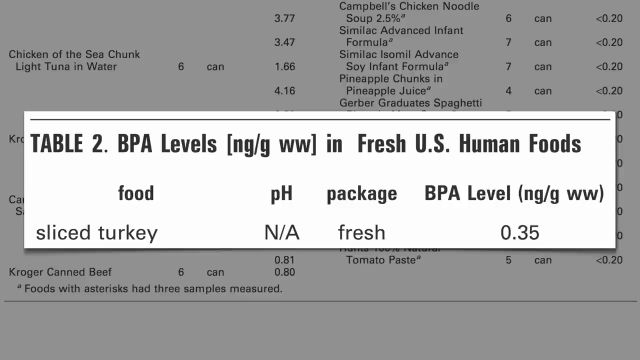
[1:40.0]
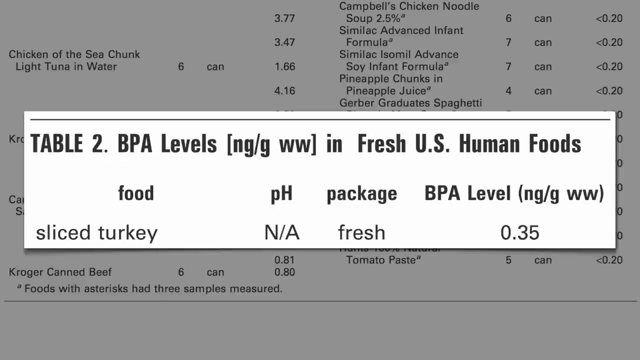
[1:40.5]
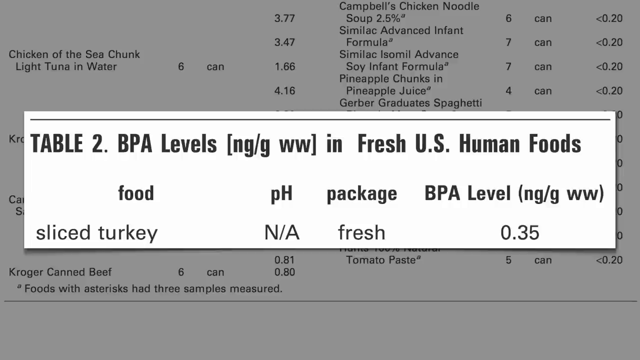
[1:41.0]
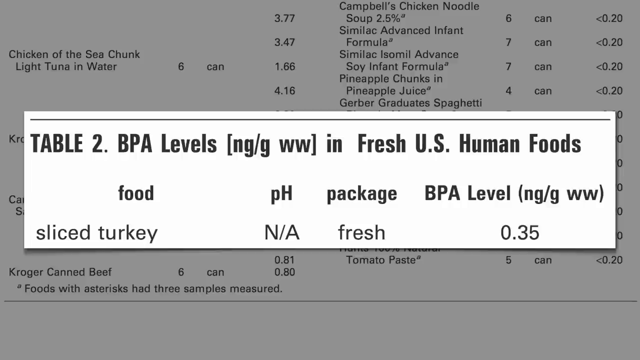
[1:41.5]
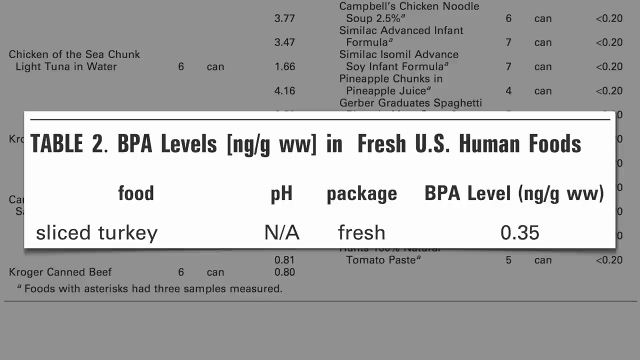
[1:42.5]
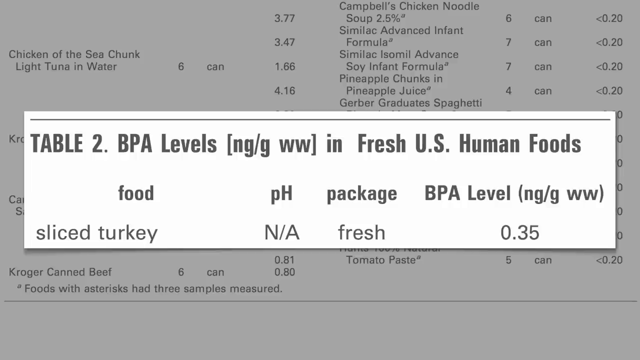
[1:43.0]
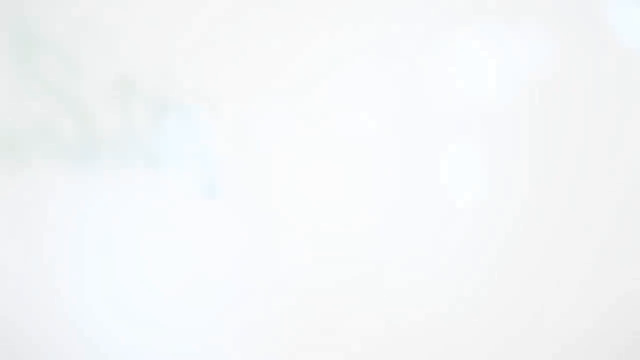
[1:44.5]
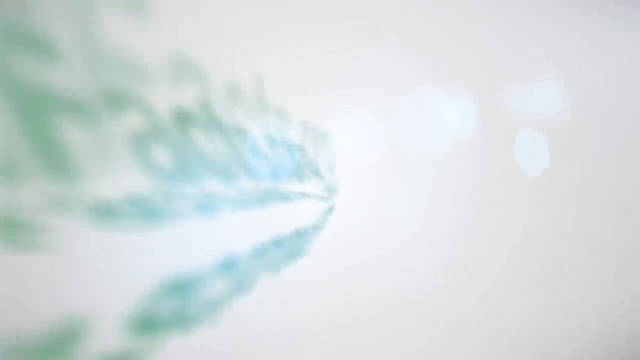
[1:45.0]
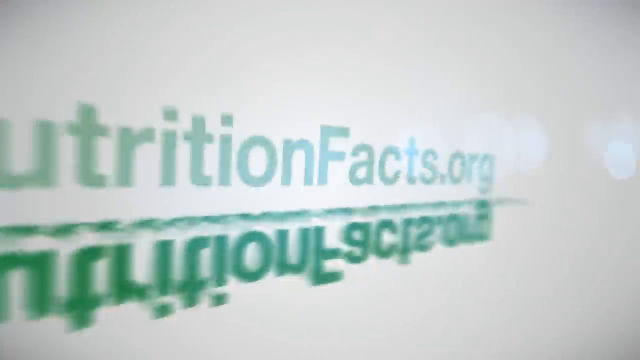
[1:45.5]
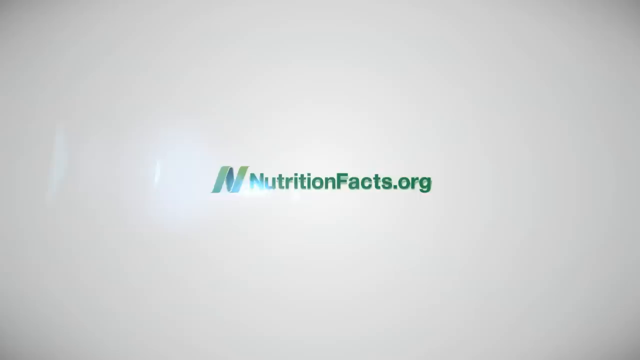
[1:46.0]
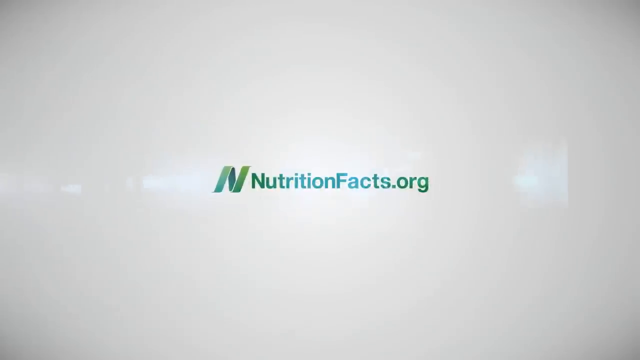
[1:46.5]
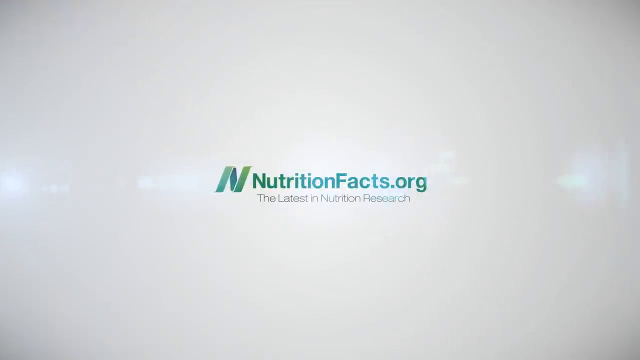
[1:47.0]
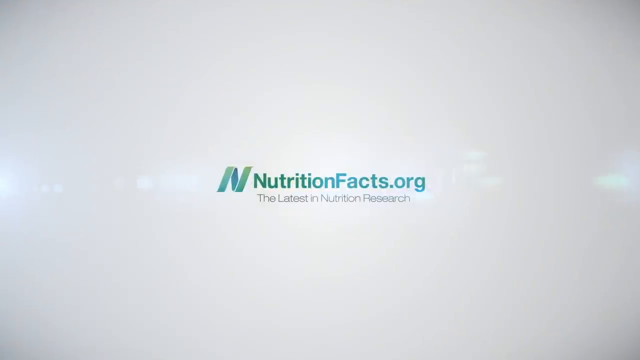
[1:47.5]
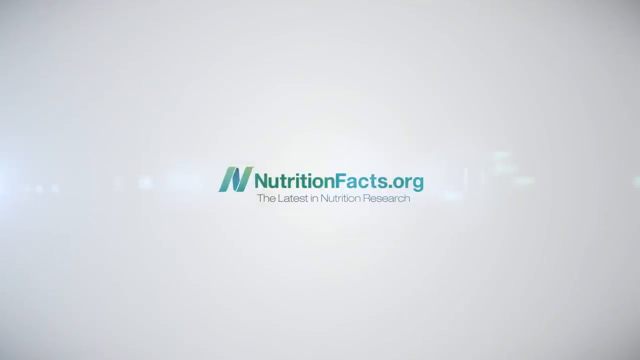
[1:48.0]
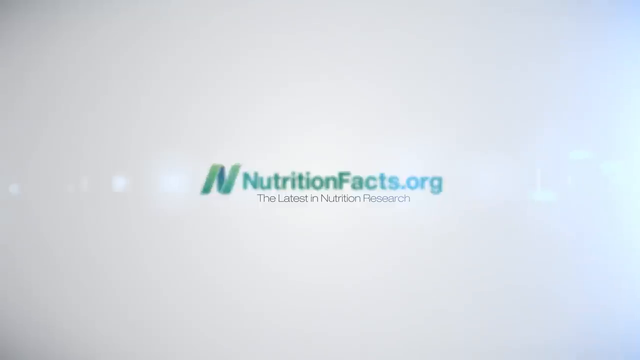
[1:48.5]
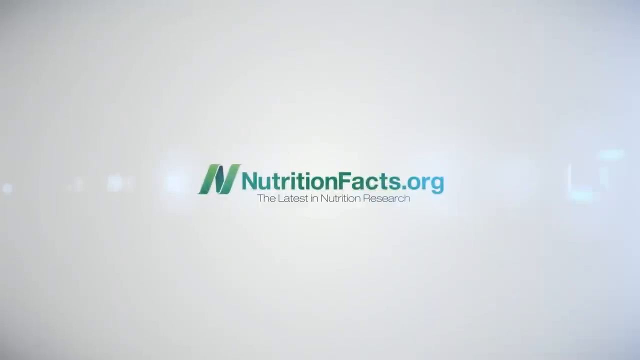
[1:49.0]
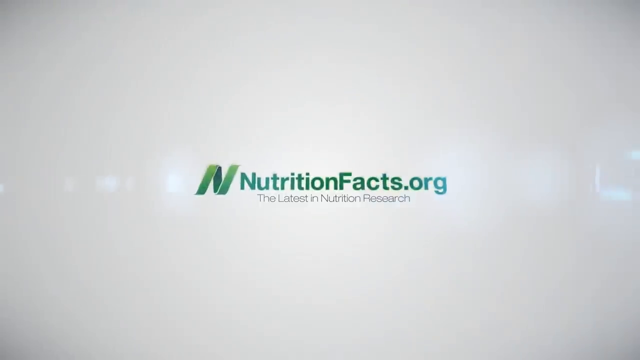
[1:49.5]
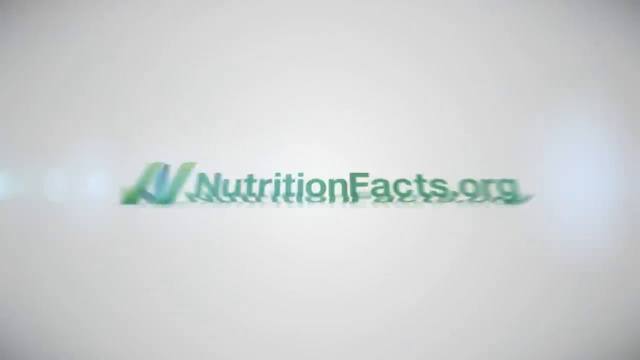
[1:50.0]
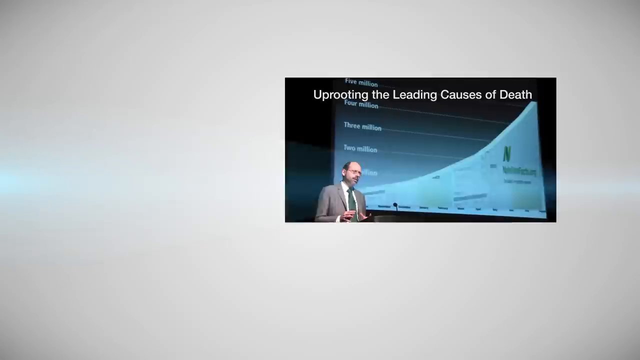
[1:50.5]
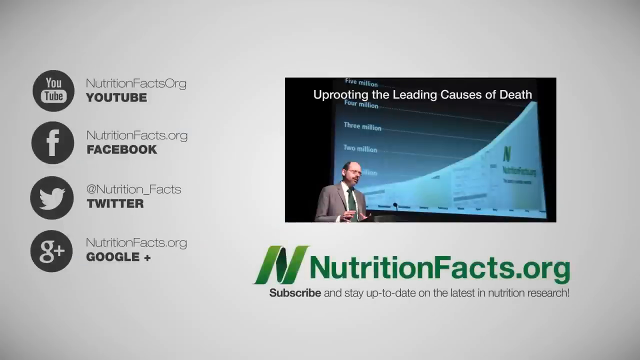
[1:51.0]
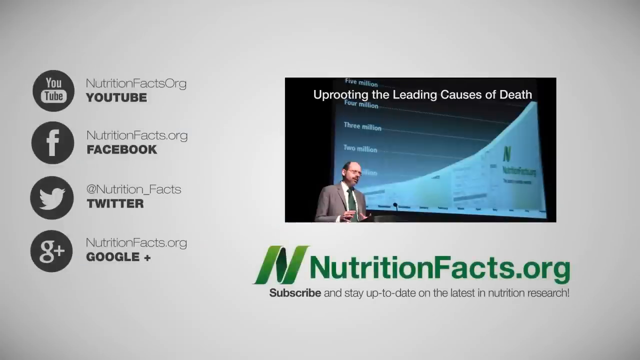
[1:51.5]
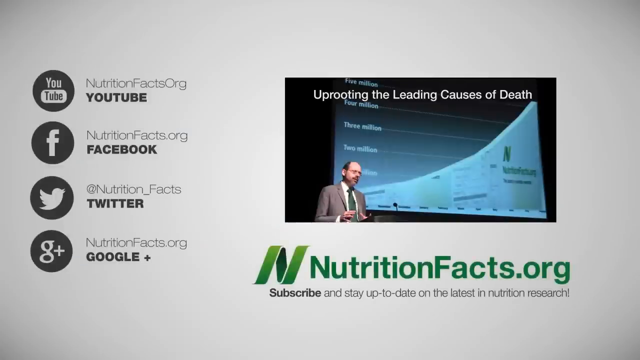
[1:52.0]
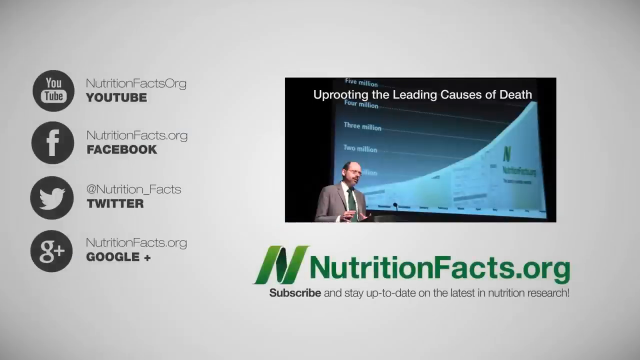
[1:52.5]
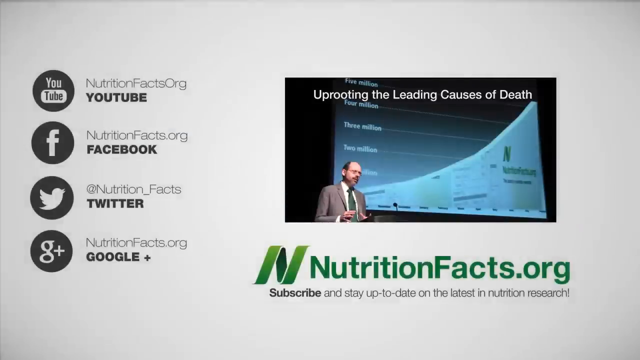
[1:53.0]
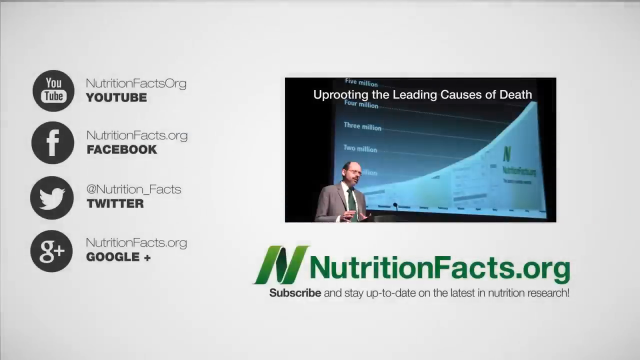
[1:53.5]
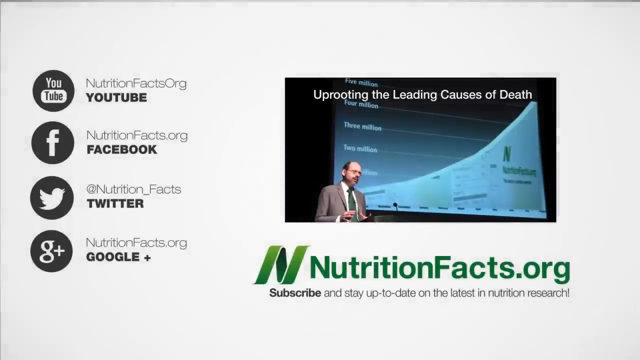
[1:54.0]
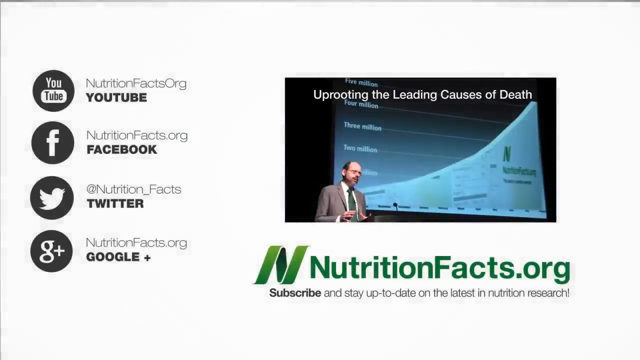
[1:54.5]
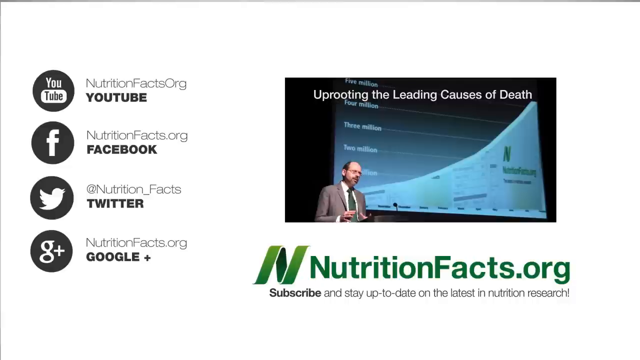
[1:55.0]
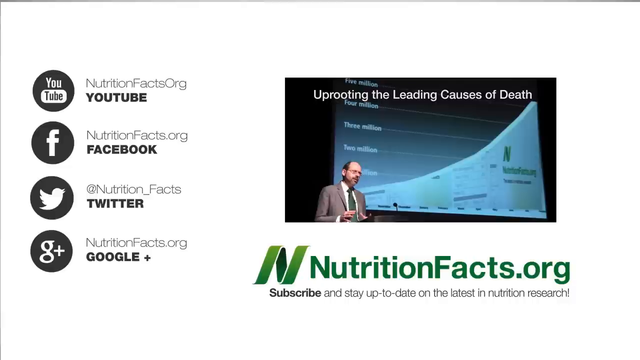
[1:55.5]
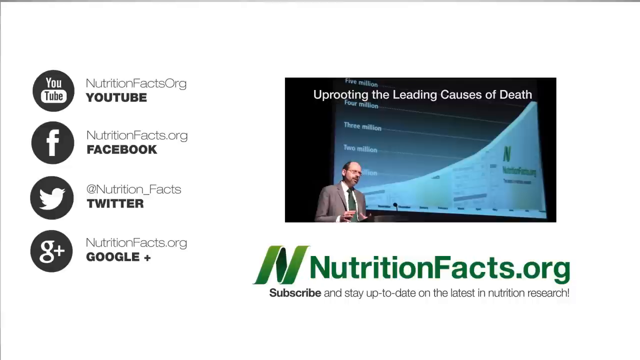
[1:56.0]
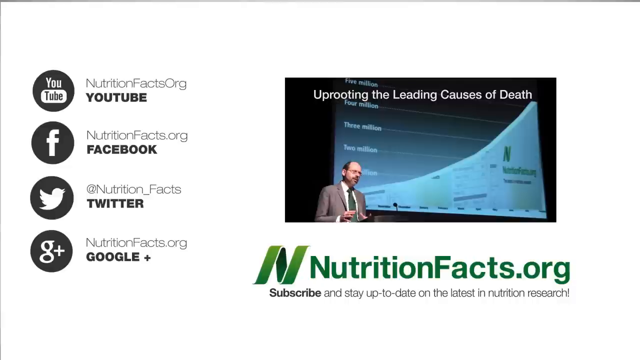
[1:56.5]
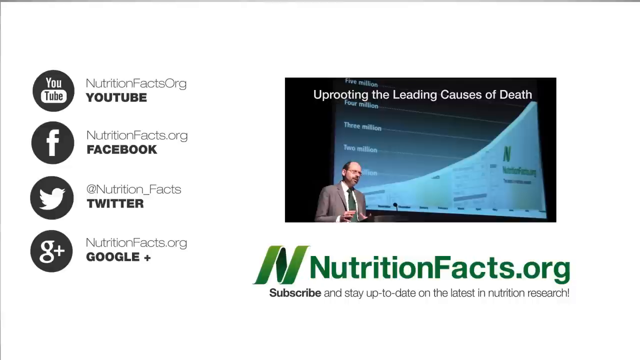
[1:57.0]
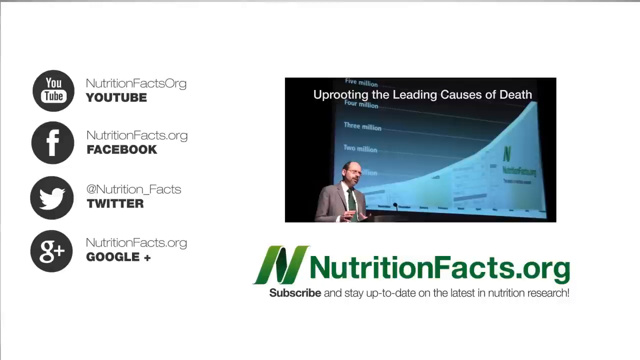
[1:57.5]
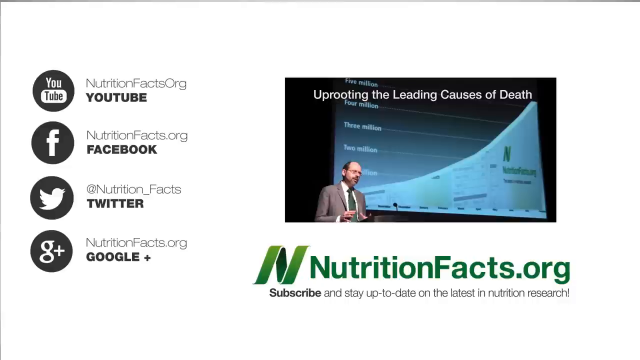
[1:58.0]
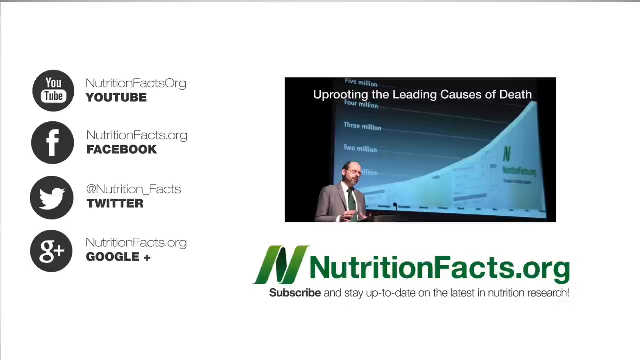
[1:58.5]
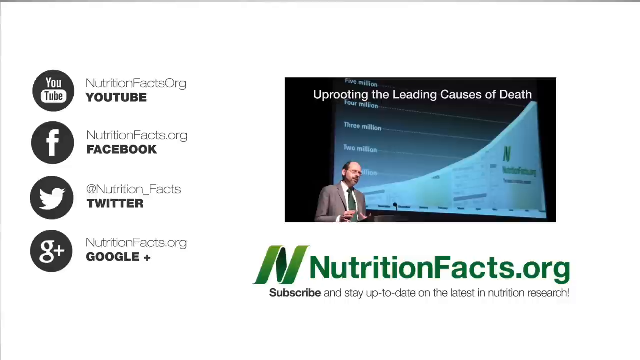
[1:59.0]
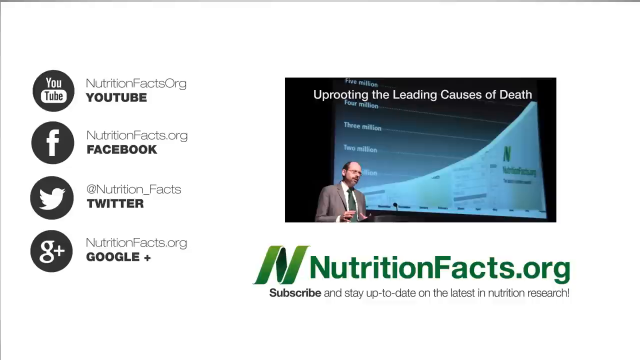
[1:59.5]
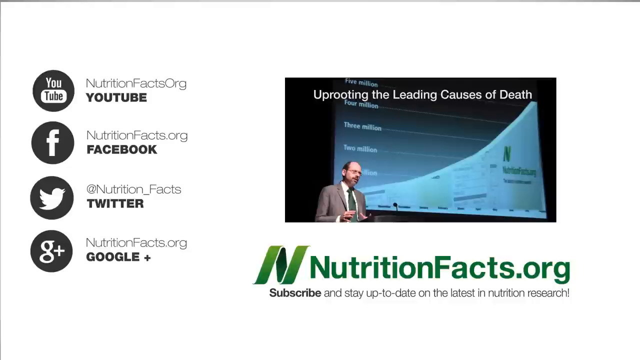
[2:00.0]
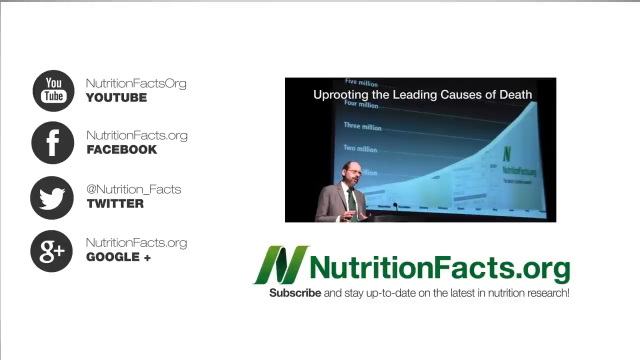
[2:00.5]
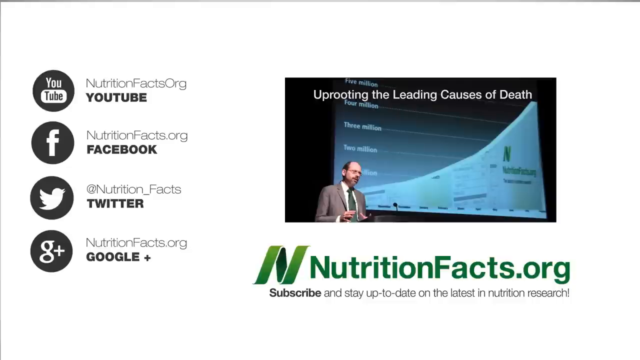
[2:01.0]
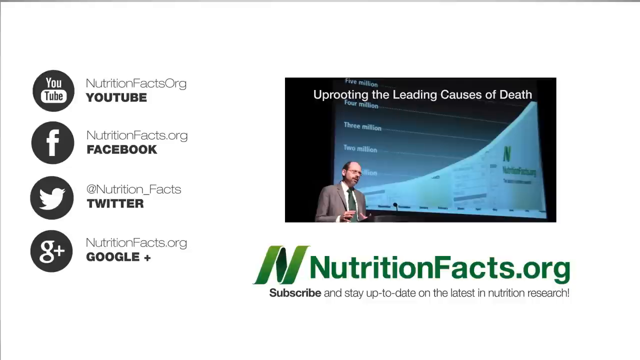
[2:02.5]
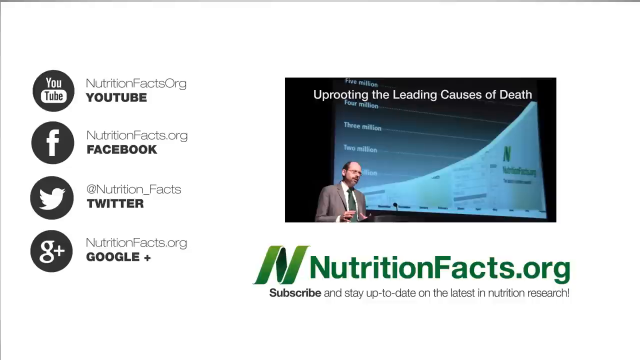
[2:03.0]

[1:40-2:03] A white rectangle is over a white page that has a table listing different brands of food and what each food is, various numbers, and the packaging, which apparently all say "can"; the table is partly covered by the rectangle. Inside the rectangle it reads "table 2 BPA levels (NG/GWW) in fresh U.S. human foods", with "food" above "sliced turkey", "PH" above "N/A", "packaging" above "fresh", and "BPA level (NG/GWW)" above "0.135". After a little while it goes to a white page, which suddenly turns gray, and a logo and website start to pop onto the screen: a blue and green N slanted to the right, "nutritionfacts.org" in blue and green, and beneath it "the latest in nutrition research" in gray. The logo starts to rotate and zooms in towards the viewer. Next comes a page with a gray background. On the left is the YouTube logo in a black circle with "Nutrition Facts Org YouTube" next to it; under it the Facebook symbol in a black circle with "Nutrition Facts.org Facebook"; under that the Twitter logo in a black circle with "at Nutrition Facts Twitter"; and under that a Google Plus symbol in a black circle with "Nutrition Facts.org Google Plus". Next to these is what looks like a video suggestion: a light-skinned man in a suit with a green tie holds his hands out against a background of a graph, with white letters reading "Uprooting the leading causes of death". Under that it reads "Nutrition Facts.org" in green, and beneath it in black, "Subscribe and stay up-to-date on the latest in nutrition research". The page stays on screen while the background gets progressively lighter until it becomes white, and the video ends.